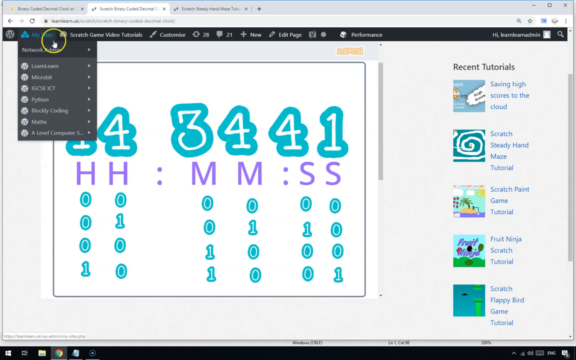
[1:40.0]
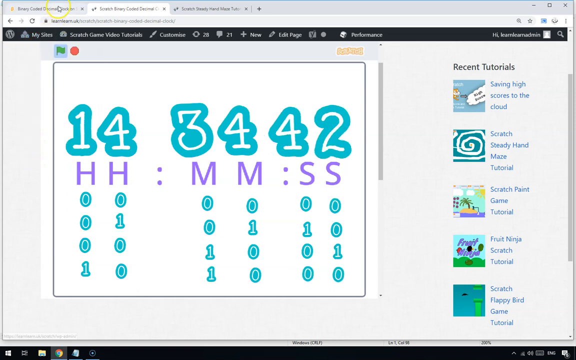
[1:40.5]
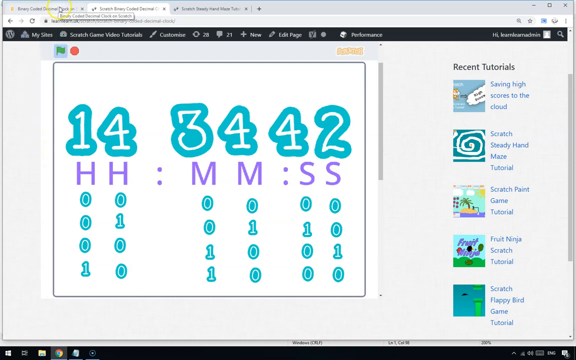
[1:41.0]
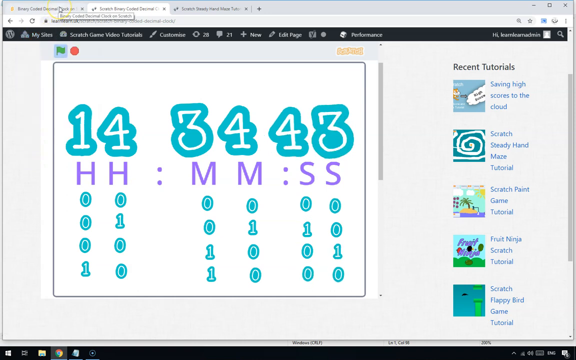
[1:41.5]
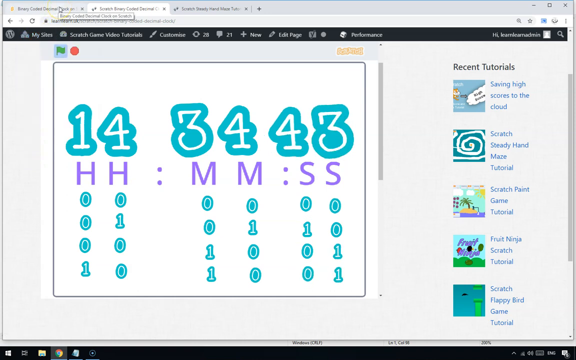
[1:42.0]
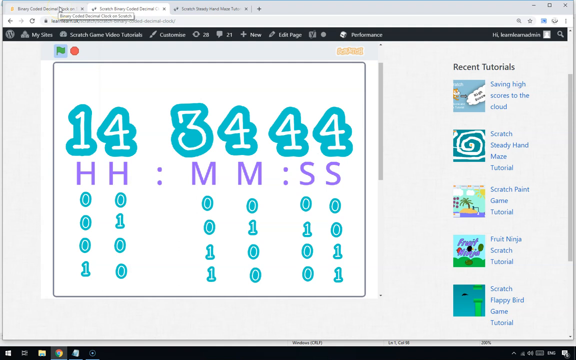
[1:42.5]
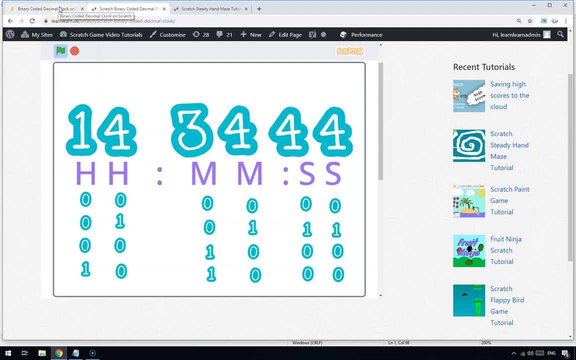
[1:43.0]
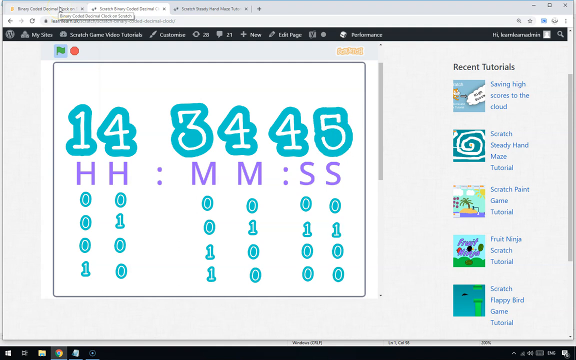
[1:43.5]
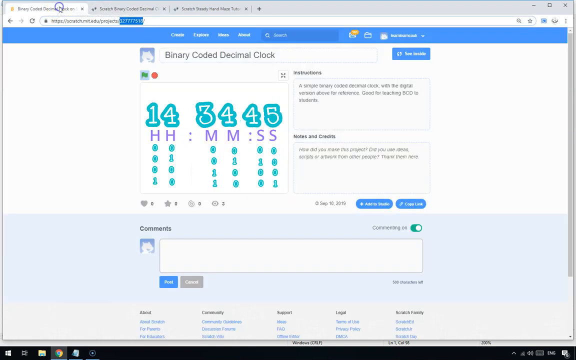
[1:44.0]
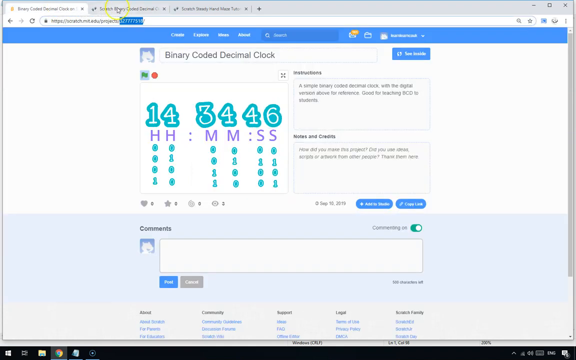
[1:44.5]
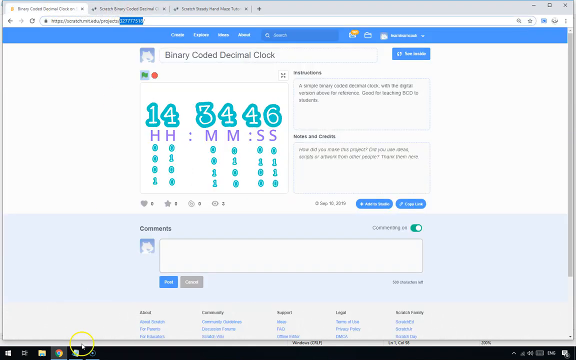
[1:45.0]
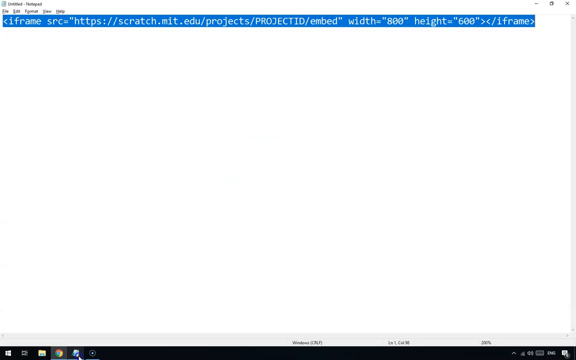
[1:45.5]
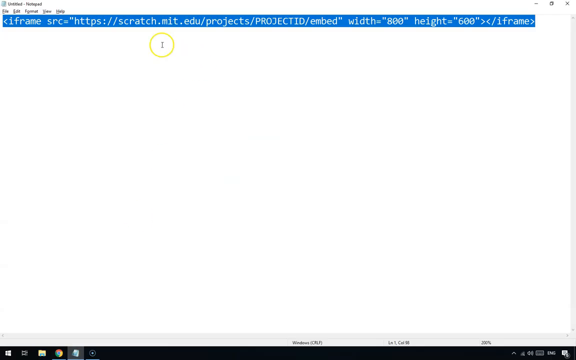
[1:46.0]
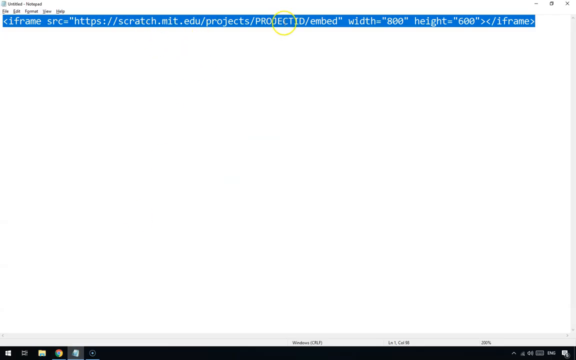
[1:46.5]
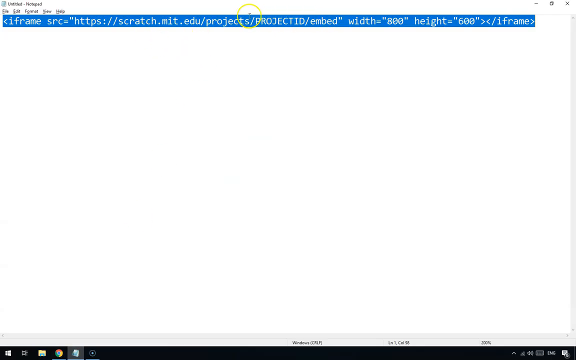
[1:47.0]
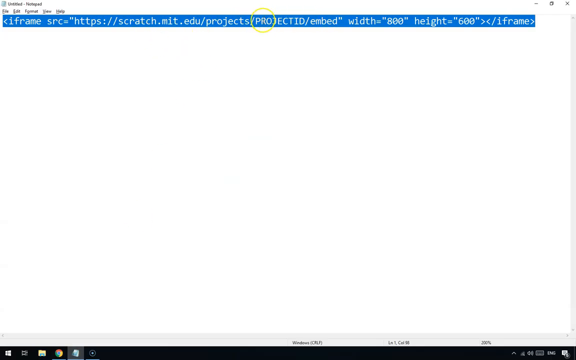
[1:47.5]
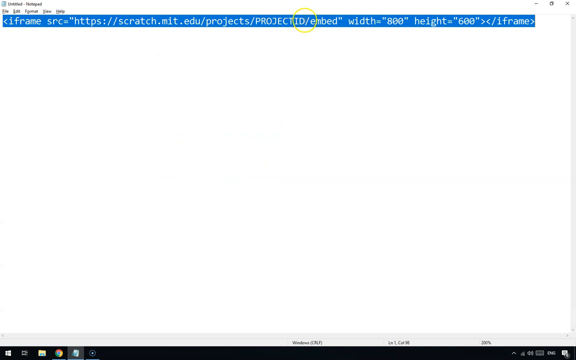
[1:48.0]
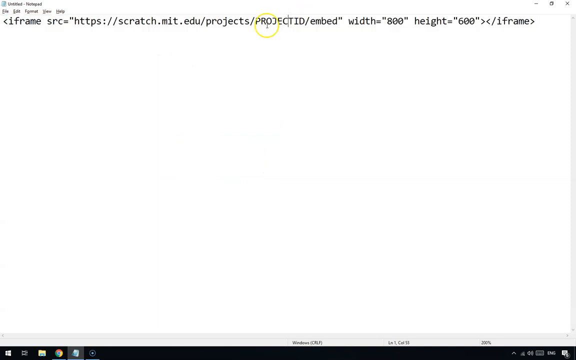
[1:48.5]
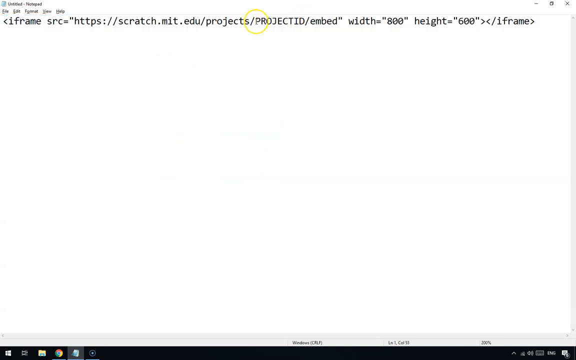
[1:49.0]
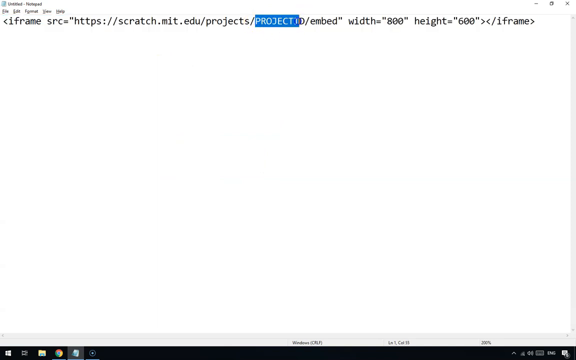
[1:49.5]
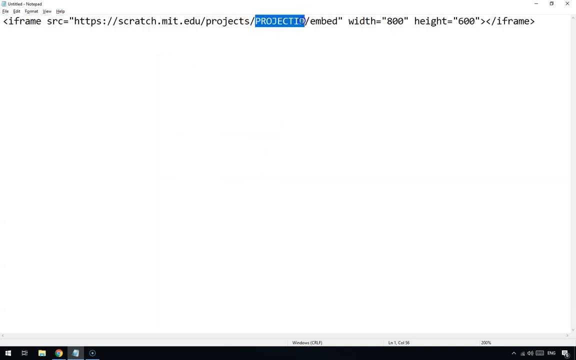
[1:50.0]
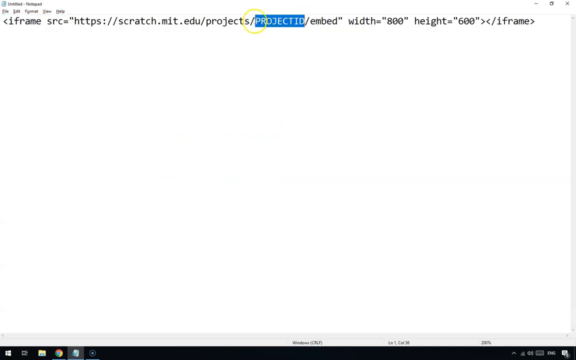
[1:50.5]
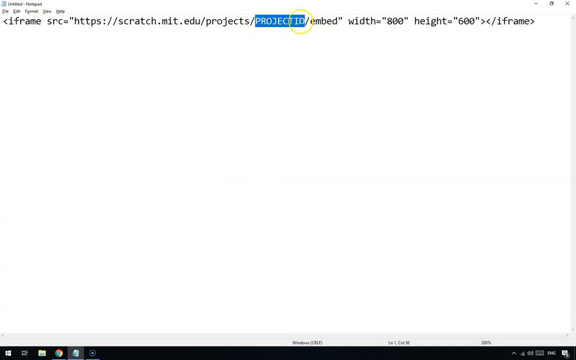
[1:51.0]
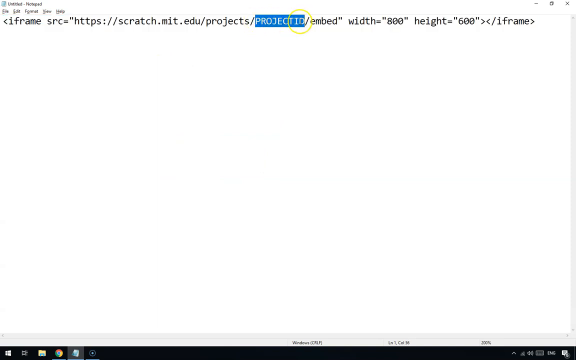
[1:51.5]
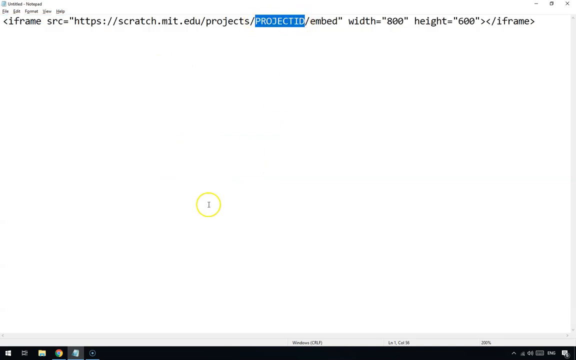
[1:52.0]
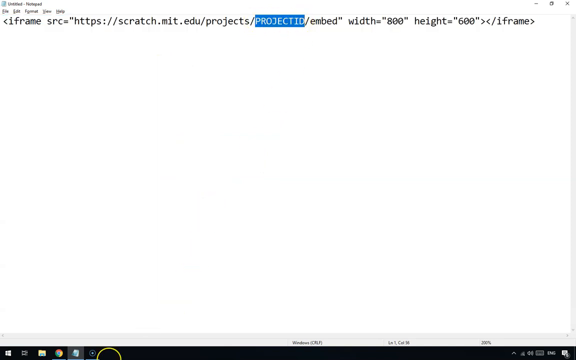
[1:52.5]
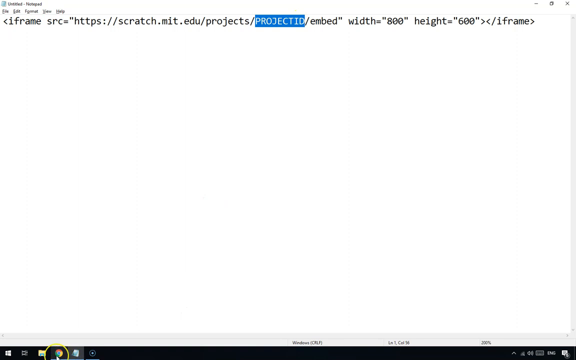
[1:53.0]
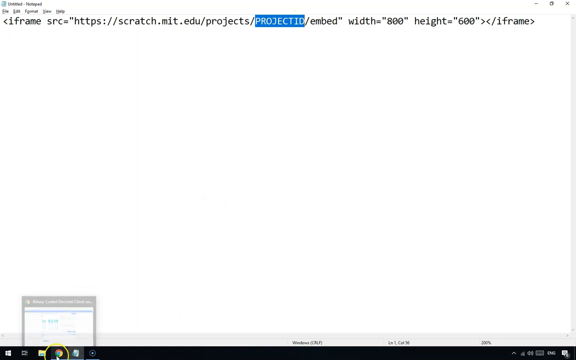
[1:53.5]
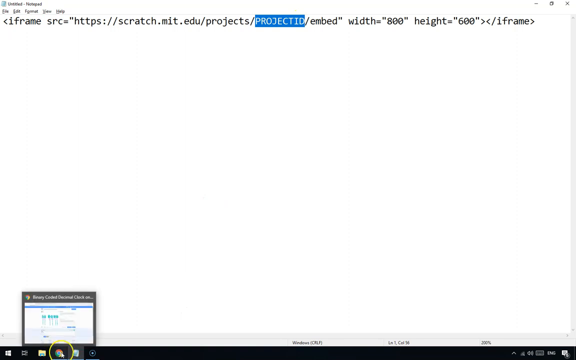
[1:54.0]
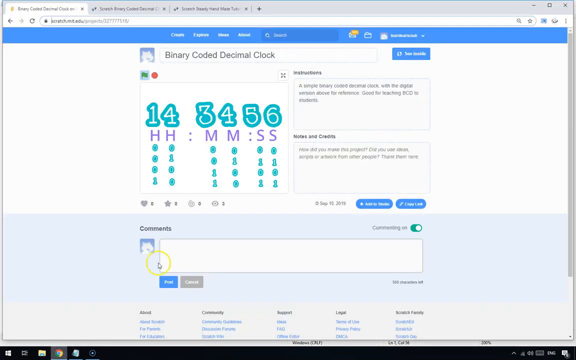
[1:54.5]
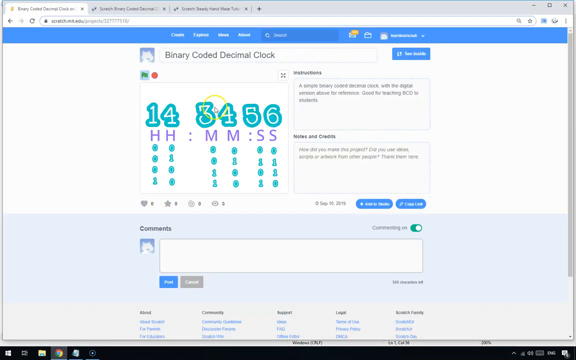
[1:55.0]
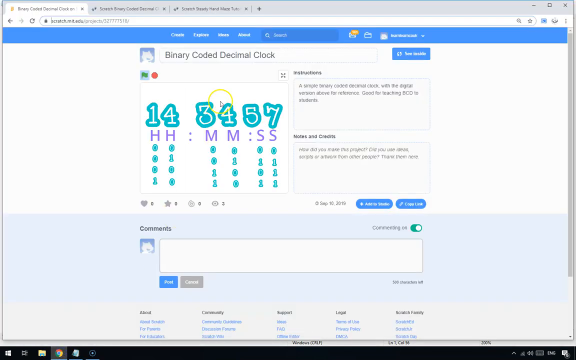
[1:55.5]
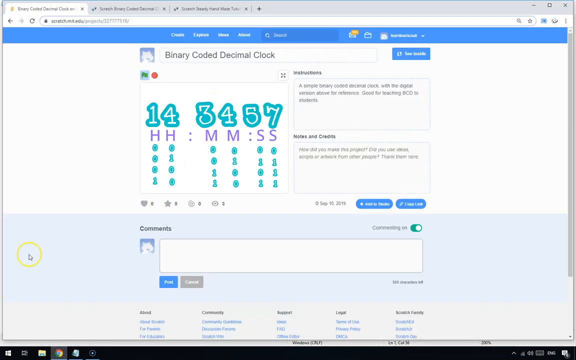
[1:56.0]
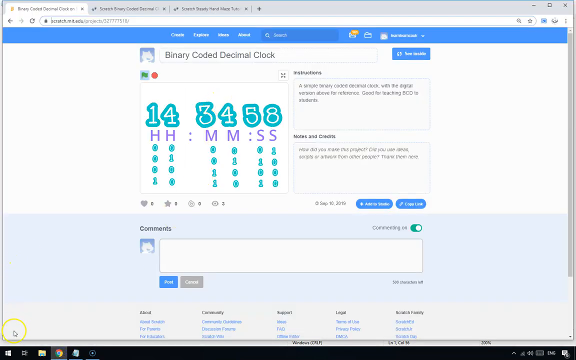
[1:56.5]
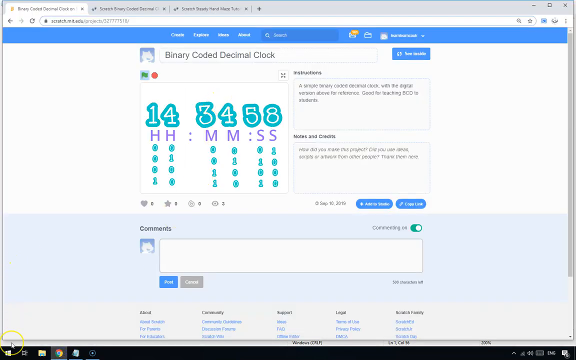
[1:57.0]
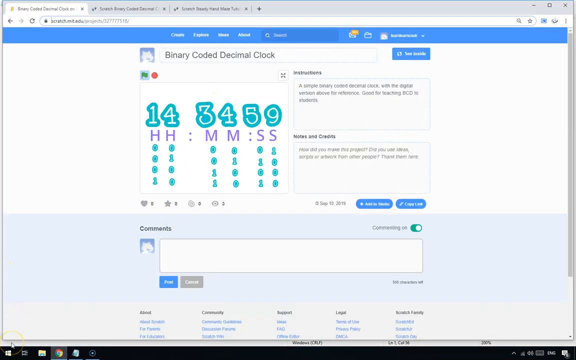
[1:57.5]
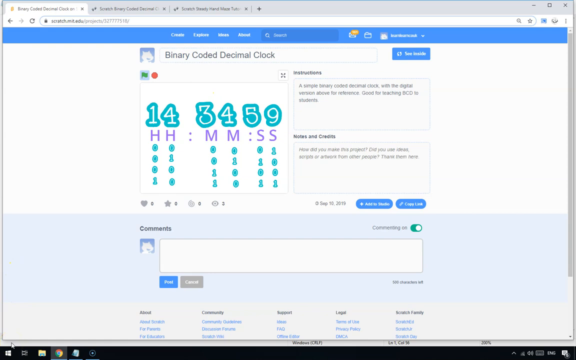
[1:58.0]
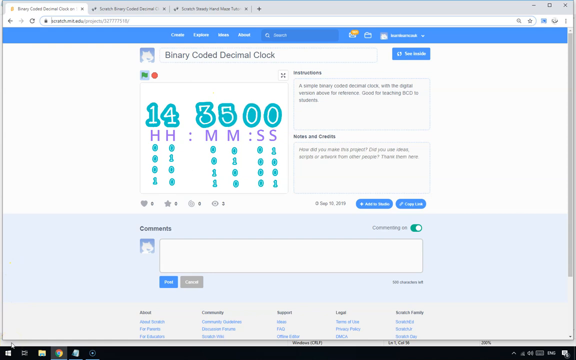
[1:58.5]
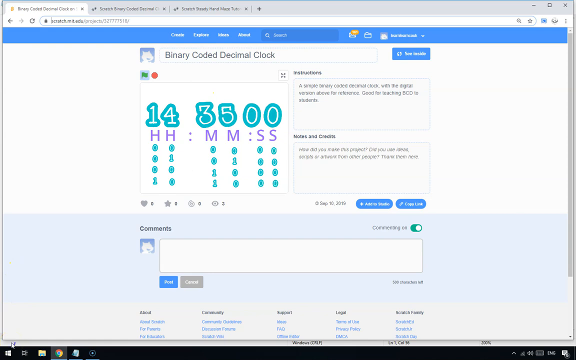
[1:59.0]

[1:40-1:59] The first tab, My Sites, is clicked, and then the binary code tab. The Notepad with the originally copied URL is opened, and the project ID is highlighted in blue. The binary coded decimal clock page is clicked and the cursor points to the calendar, then returns to the created Scratch binary coded decimal page, which shows 14 hours, 35 minutes and zero seconds. The tabs are hard to make out: the view is quite blurry and not in focus, the text is hard to read, there is little zooming in, and the cursor moves fairly quickly.